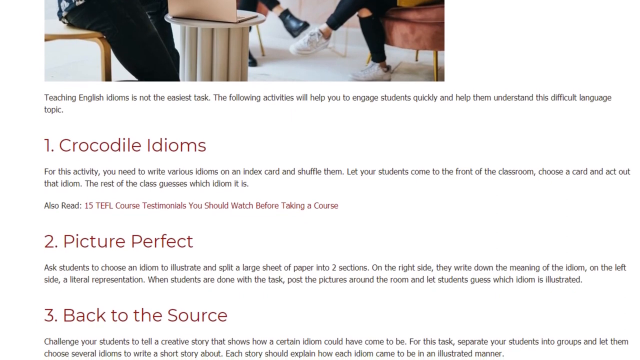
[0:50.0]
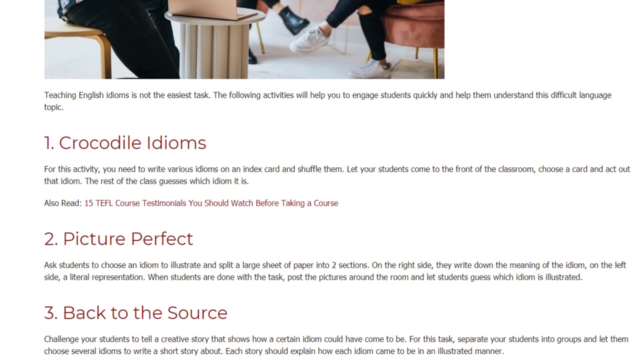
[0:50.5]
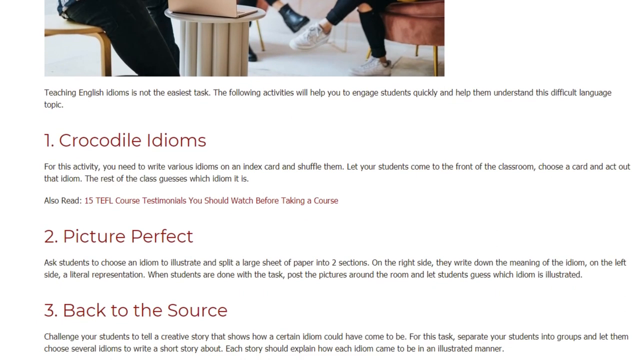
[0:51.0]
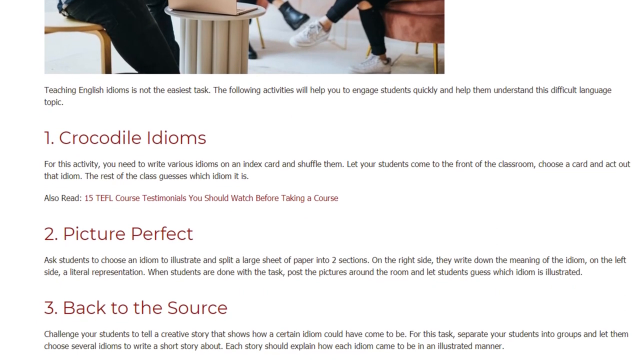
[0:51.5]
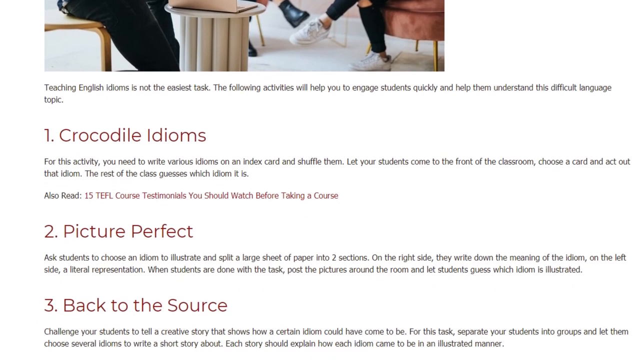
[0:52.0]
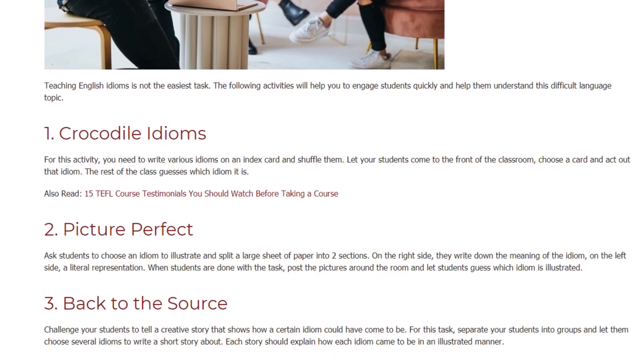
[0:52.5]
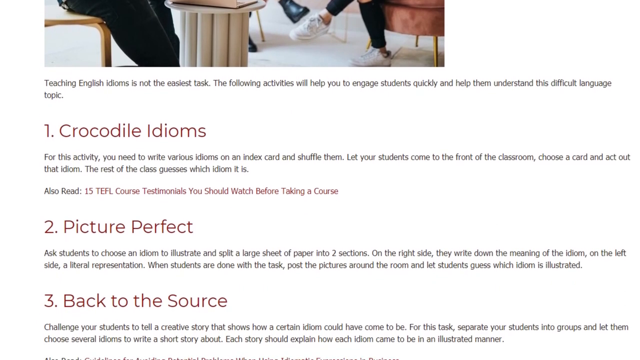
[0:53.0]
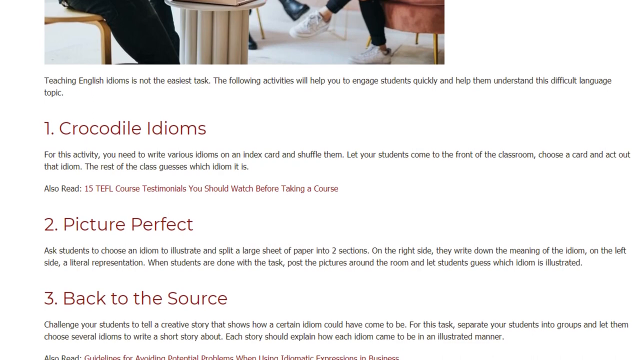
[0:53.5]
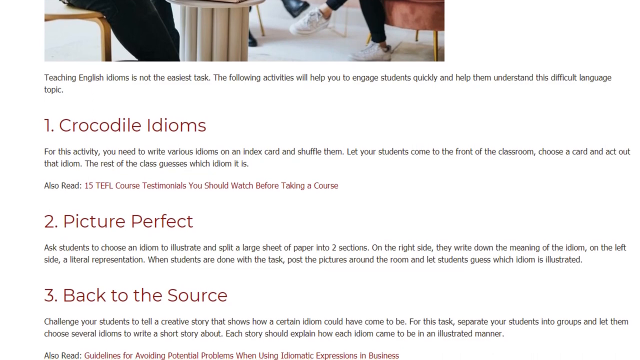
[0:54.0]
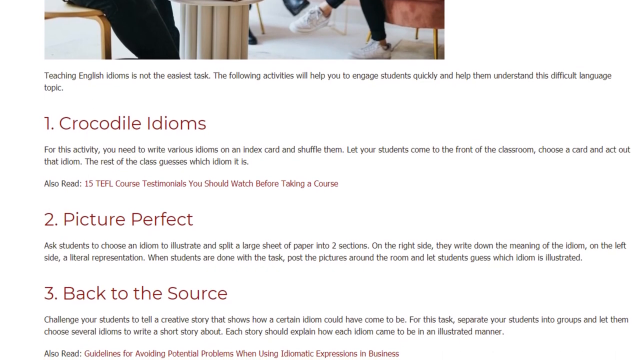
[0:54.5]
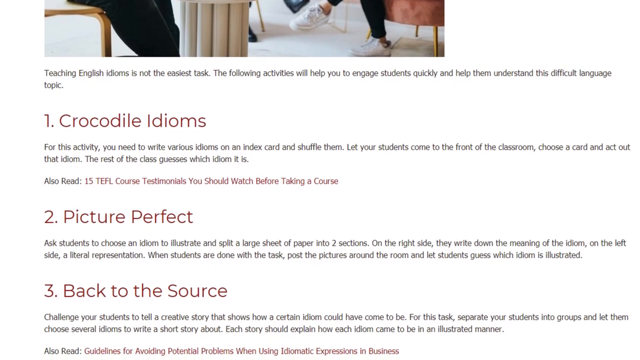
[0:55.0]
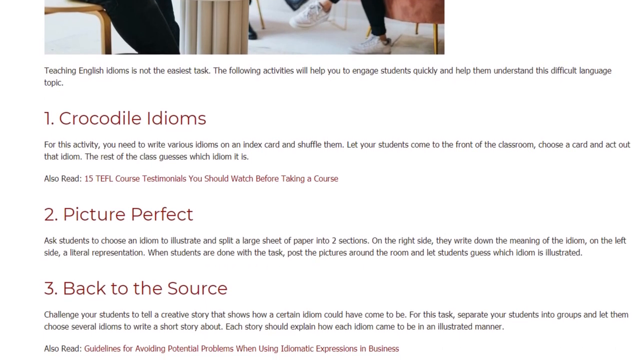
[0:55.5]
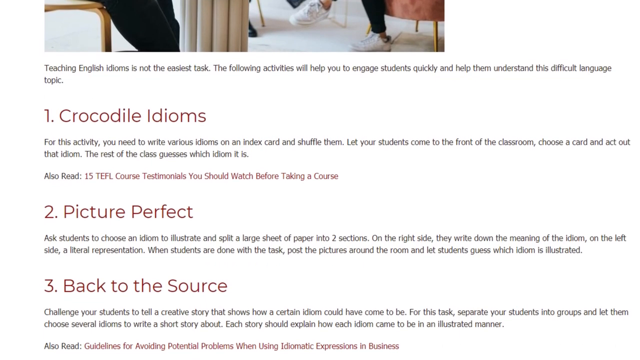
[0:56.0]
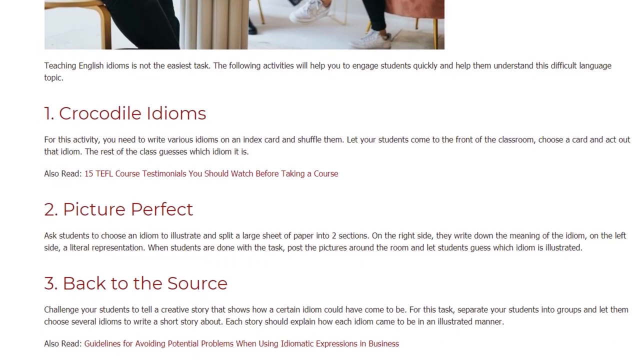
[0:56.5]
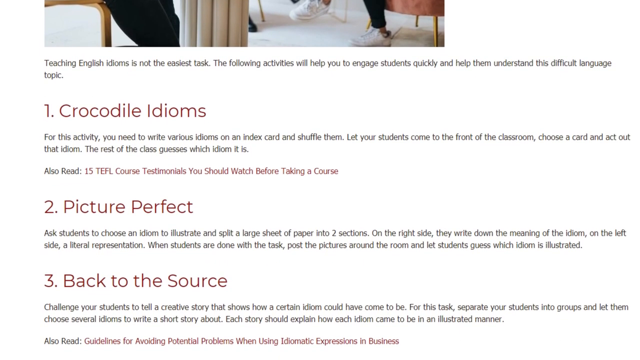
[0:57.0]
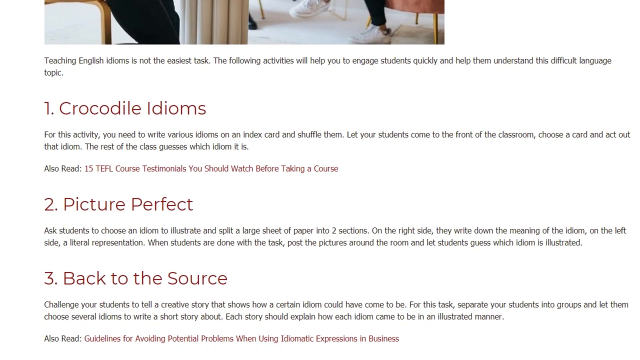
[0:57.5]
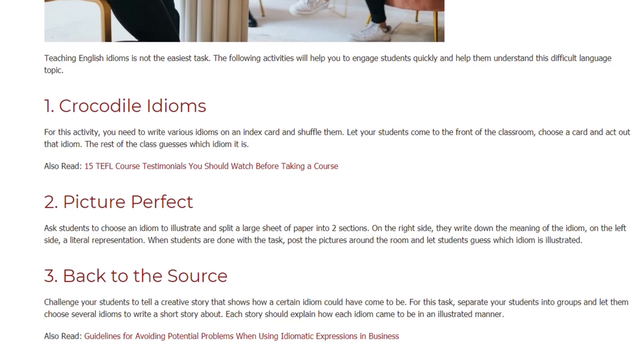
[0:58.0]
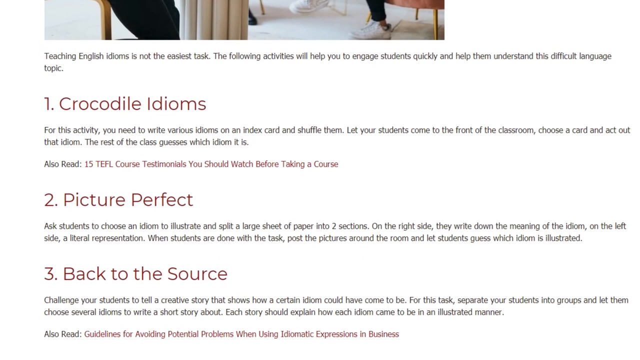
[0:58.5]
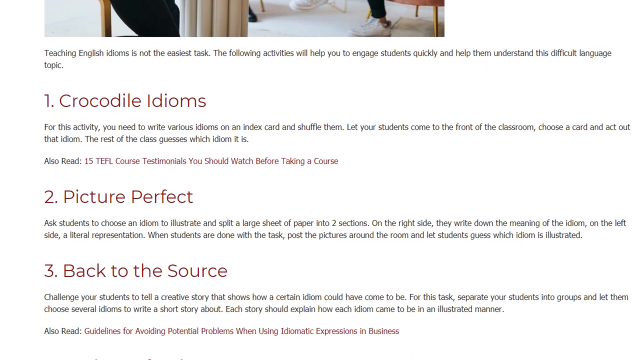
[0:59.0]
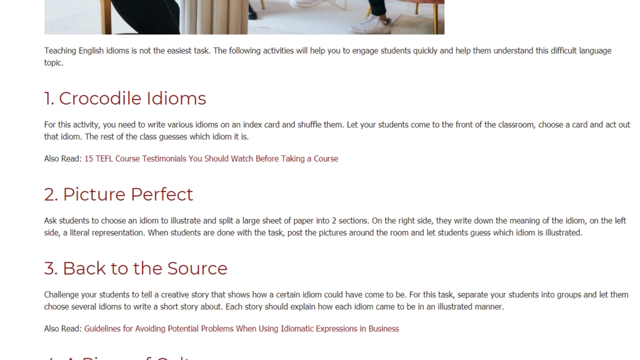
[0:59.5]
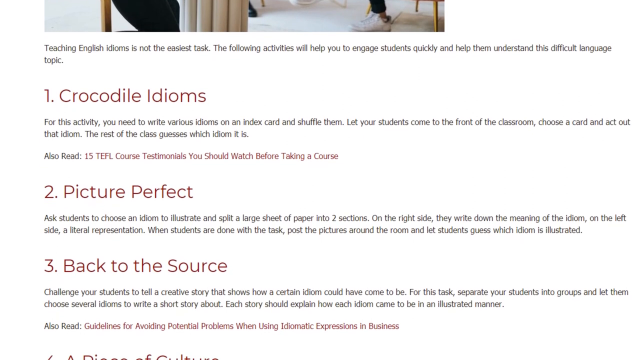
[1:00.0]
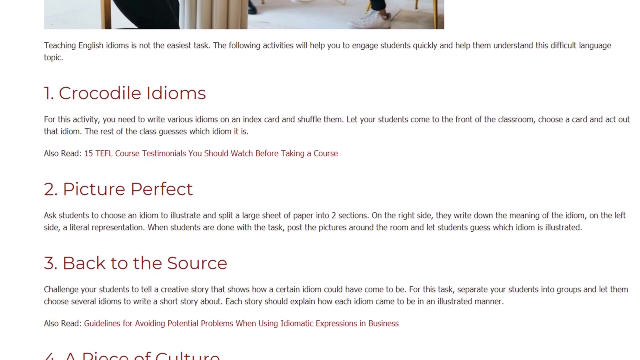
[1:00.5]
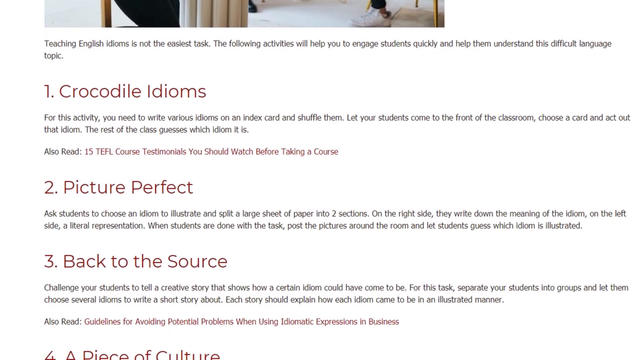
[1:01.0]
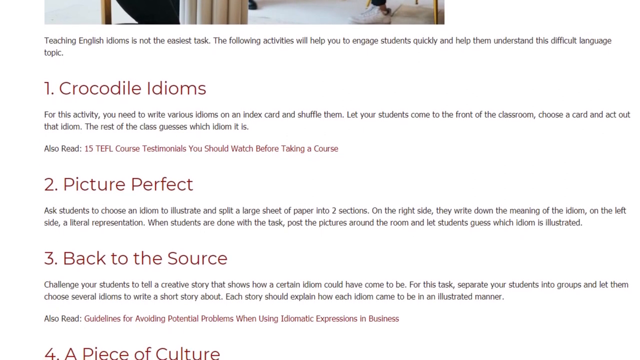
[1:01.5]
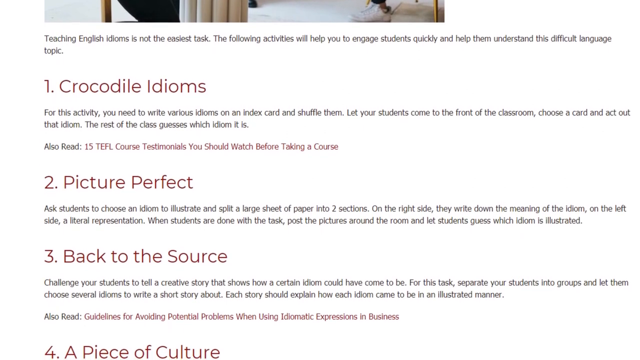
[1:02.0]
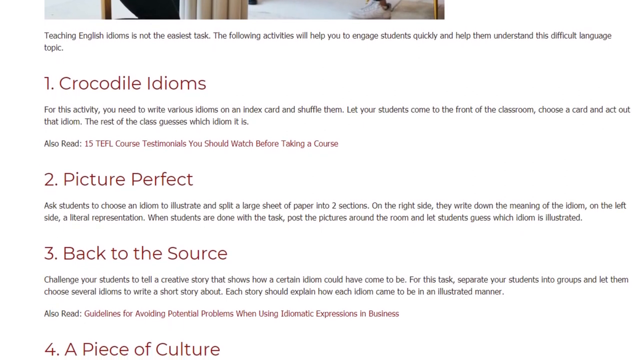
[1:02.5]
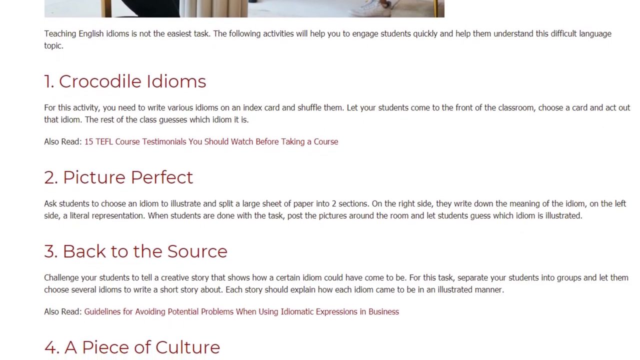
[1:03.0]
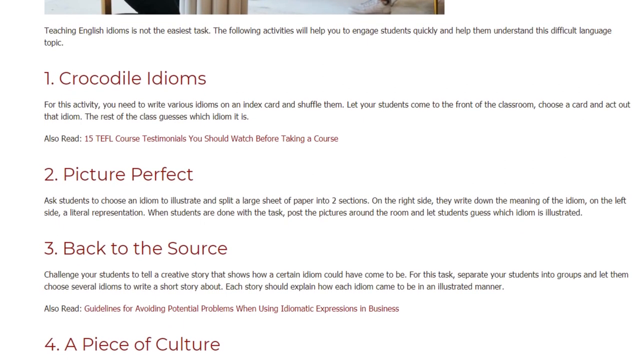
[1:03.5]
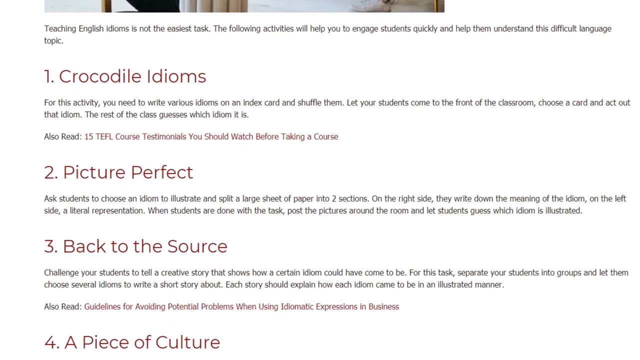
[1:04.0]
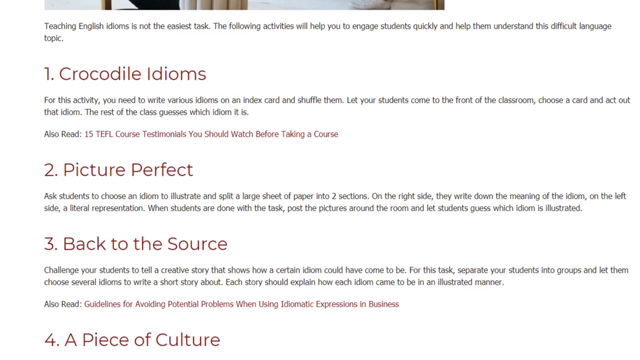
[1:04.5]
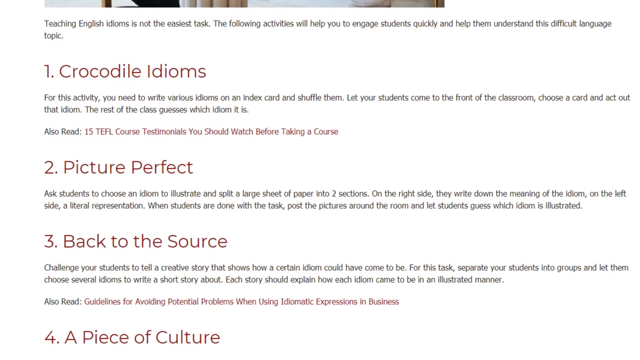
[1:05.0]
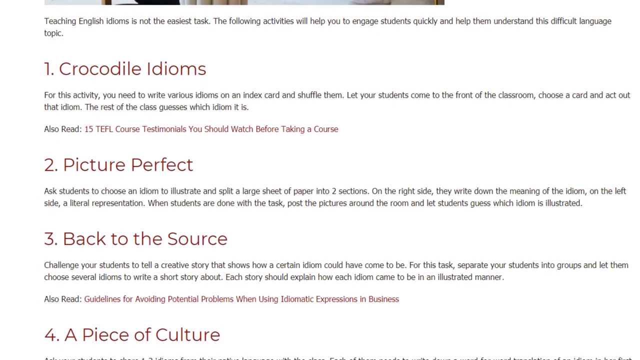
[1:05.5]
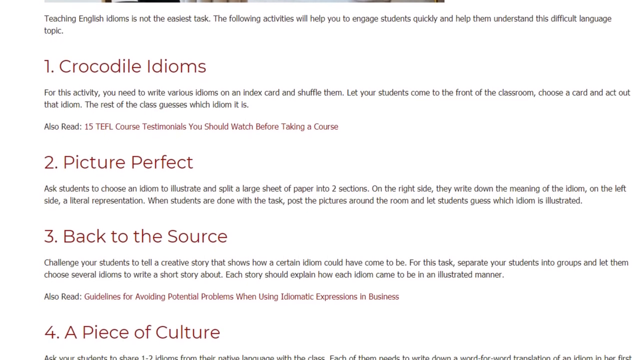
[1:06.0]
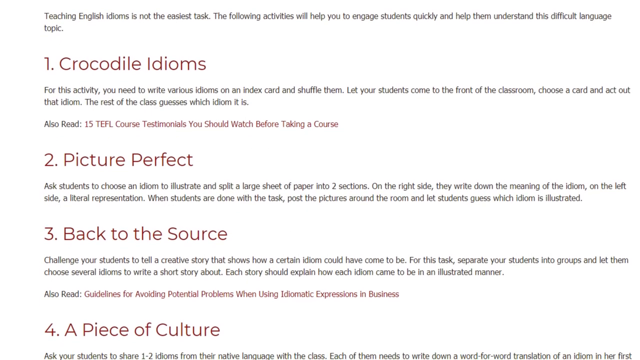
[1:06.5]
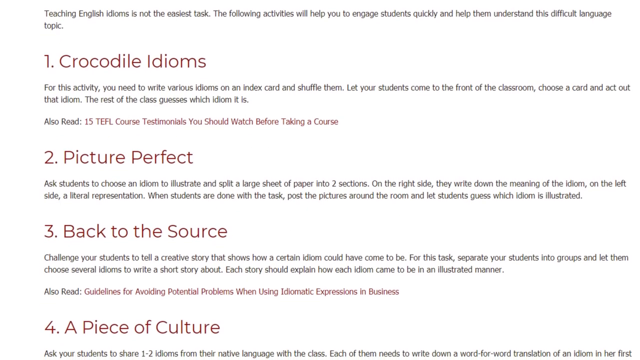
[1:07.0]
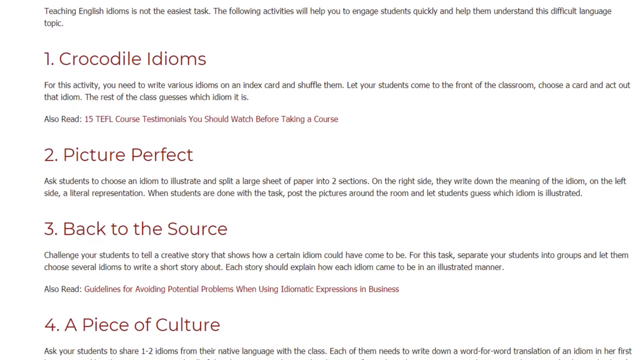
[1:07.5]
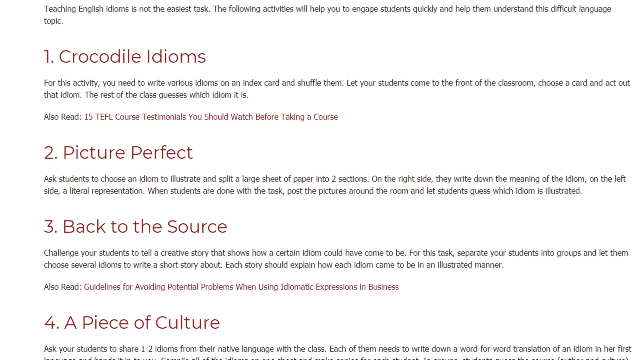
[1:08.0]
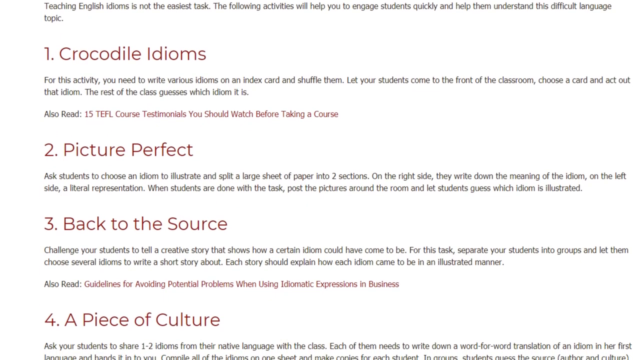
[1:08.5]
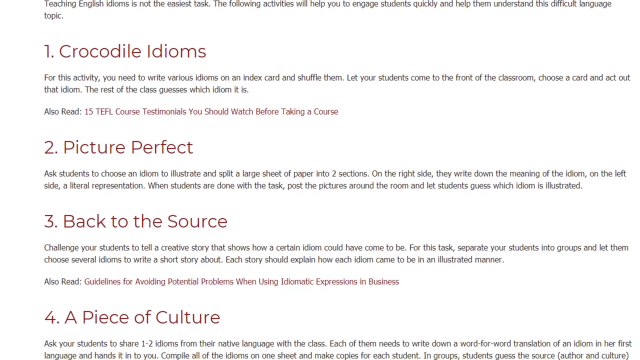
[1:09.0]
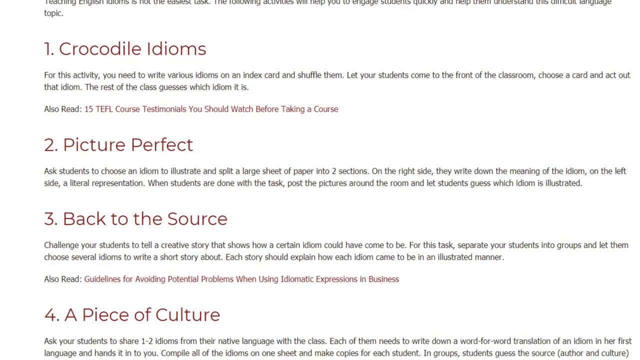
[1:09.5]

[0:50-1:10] The video gives guidance on teaching idioms to students of English as a Second Language. At the top is a photo of a male teacher teaching two adult women, and the screen scrolls down through a long list. The first strategy is "crocodile idioms," with the text: "For this activity you need to write down various idioms on an index card and shuffle them. Let your students come to the front of the classroom, choose a card and act out that idiom. The rest of the class guesses which idiom it is." Below that is a hyperlink. The second strategy is "picture perfect," with the directions: "Ask students to choose an idiom to illustrate and split a large sheet of paper into two sections. On the right side they write down the meaning of the idiom, on the left side a literal representation. When students are done with the task post the pictures around the room and let students guess which idiom is illustrated." The third strategy is "back to the source," with the directions: "Challenge your students to tell a creative story that shows how a certain idiom could have come to be. For this task, separate your students into groups and let them choose several idioms to write a short story about. Each story should explain how each idiom came to be in an illustrated manner." Number four, "a piece of culture," appears next.